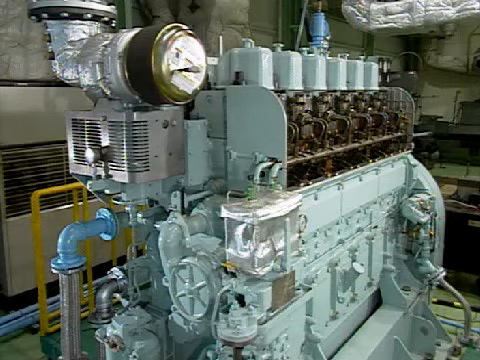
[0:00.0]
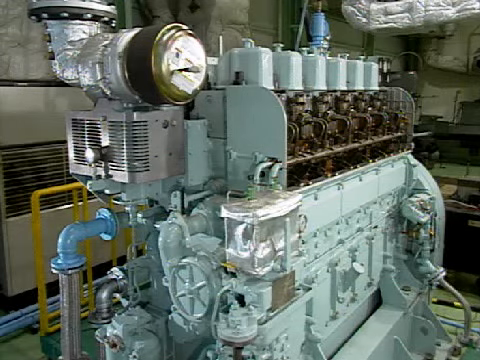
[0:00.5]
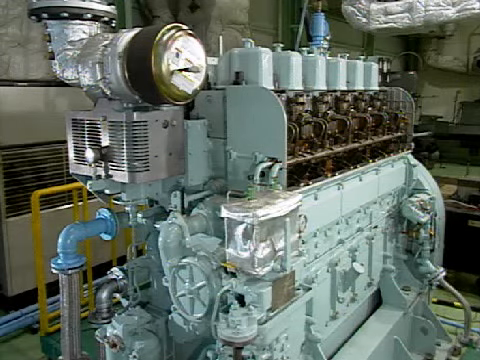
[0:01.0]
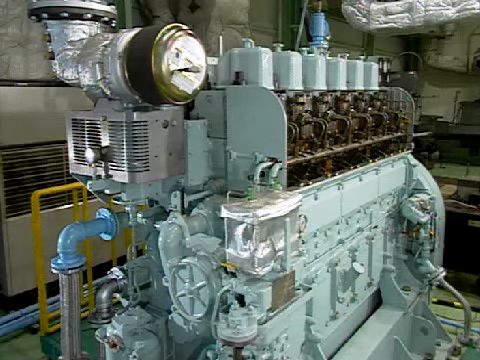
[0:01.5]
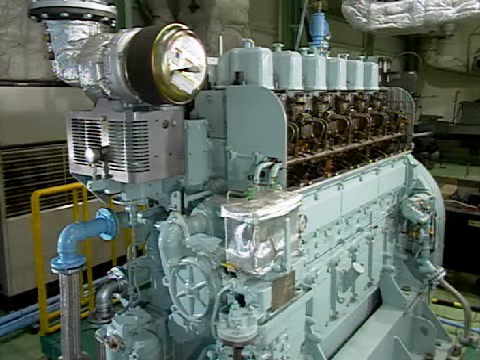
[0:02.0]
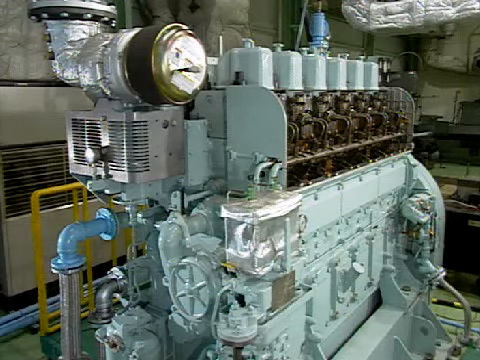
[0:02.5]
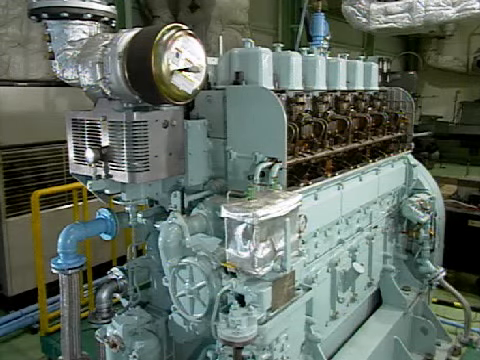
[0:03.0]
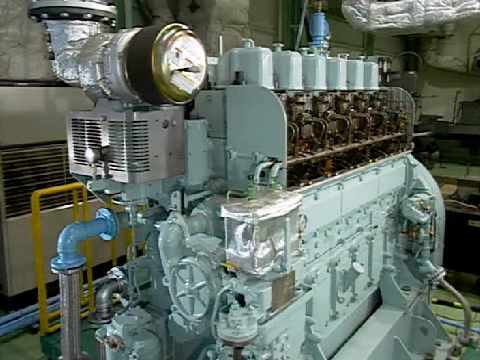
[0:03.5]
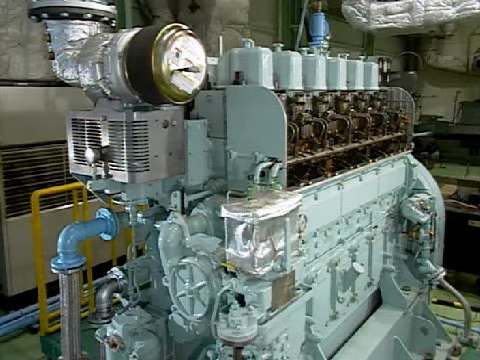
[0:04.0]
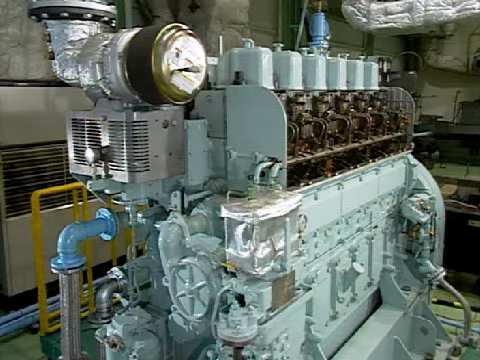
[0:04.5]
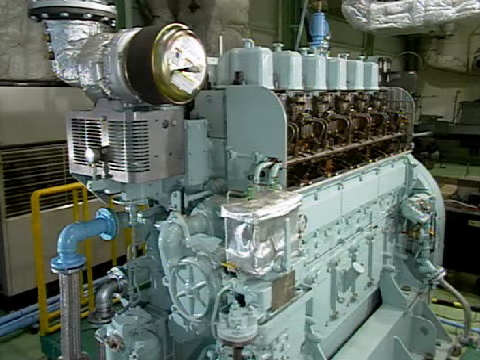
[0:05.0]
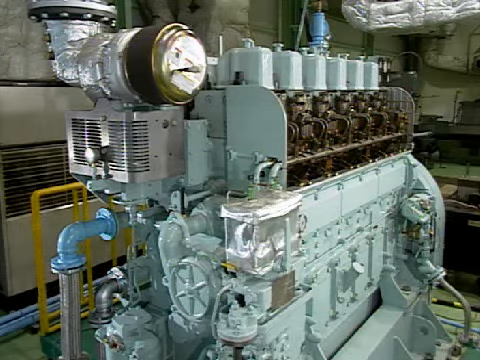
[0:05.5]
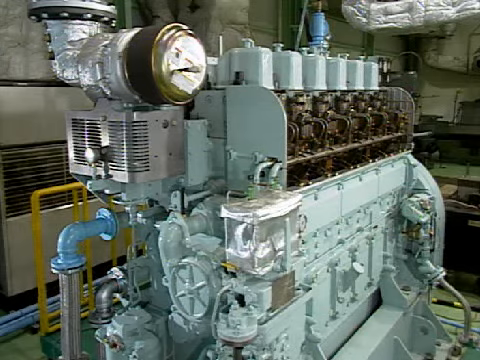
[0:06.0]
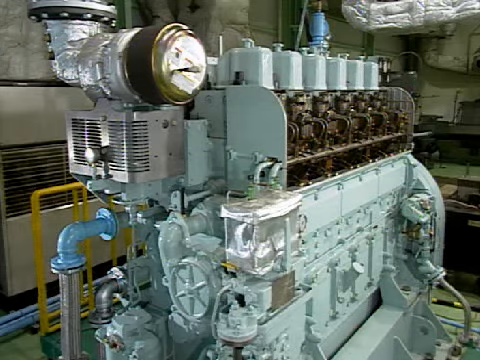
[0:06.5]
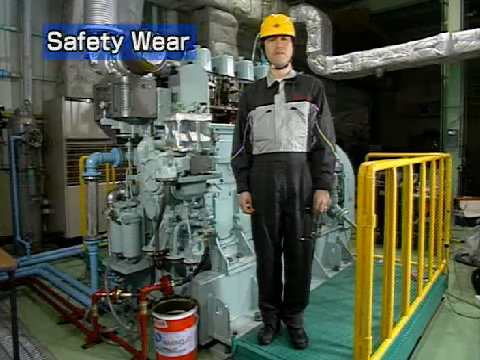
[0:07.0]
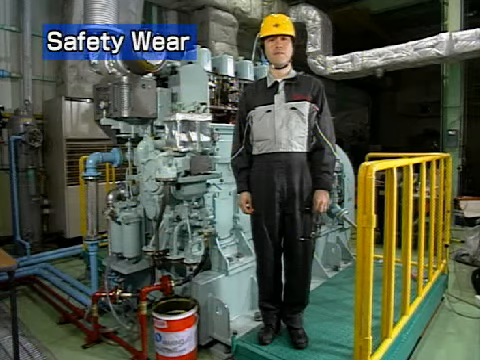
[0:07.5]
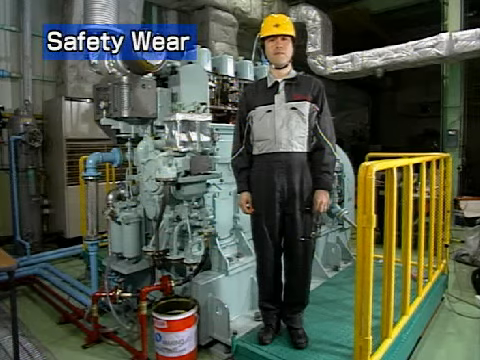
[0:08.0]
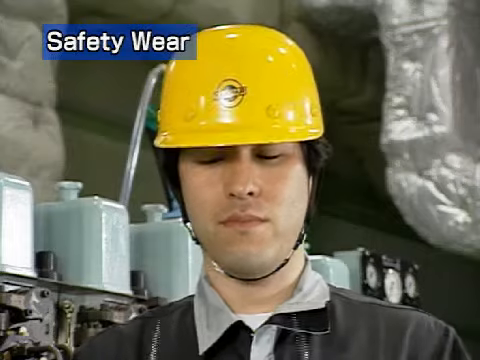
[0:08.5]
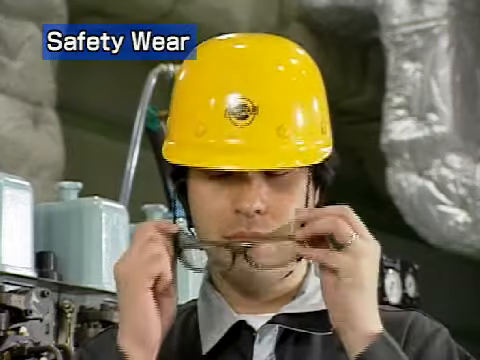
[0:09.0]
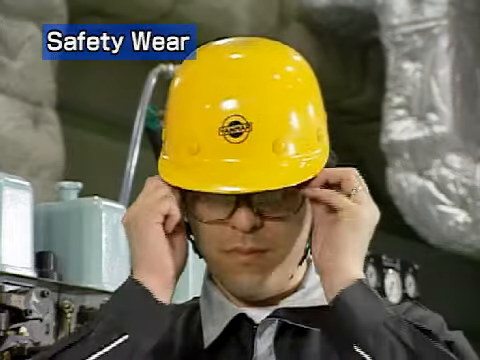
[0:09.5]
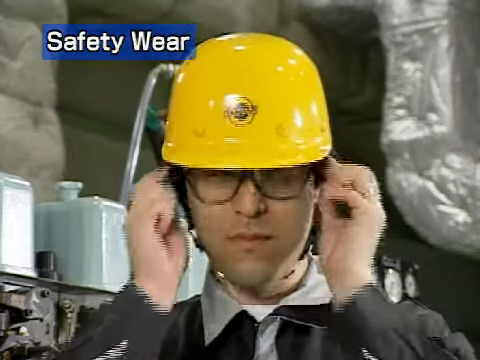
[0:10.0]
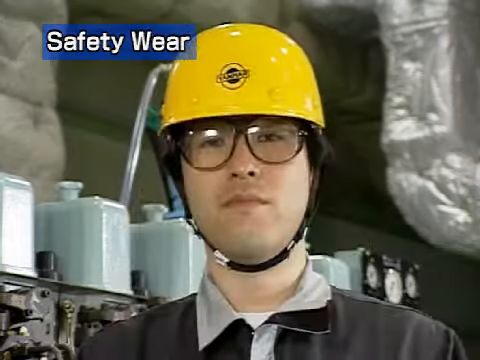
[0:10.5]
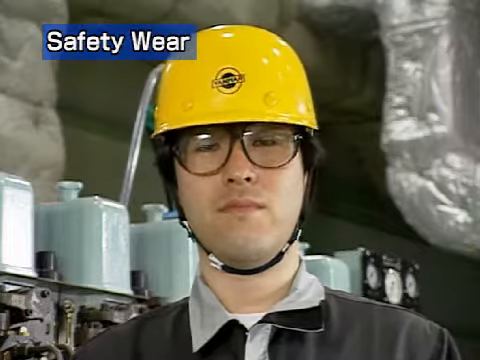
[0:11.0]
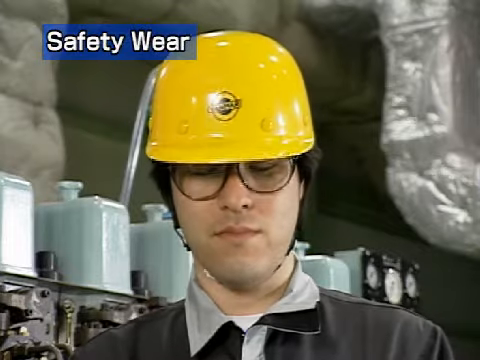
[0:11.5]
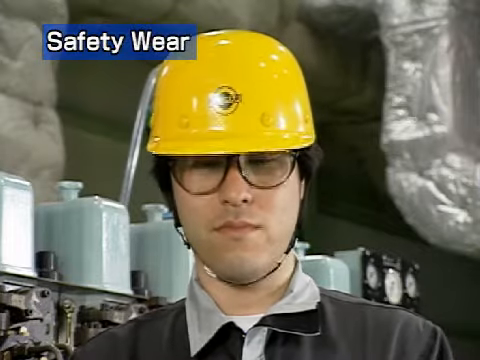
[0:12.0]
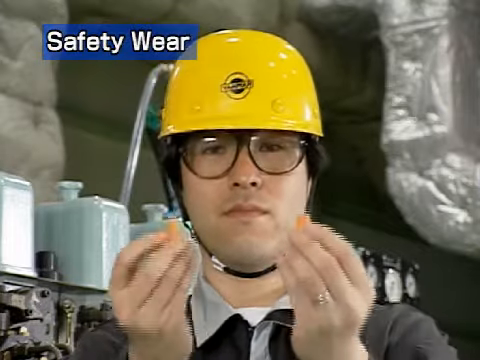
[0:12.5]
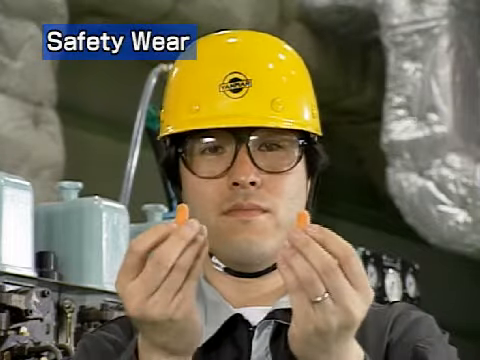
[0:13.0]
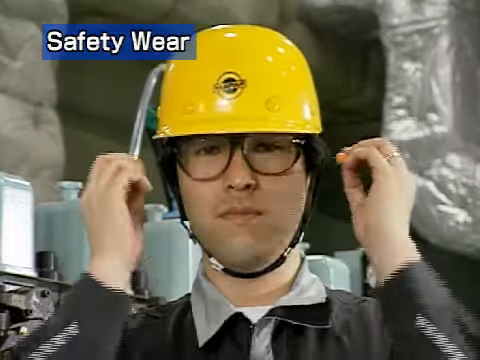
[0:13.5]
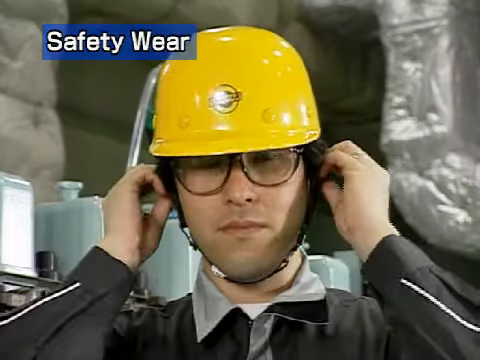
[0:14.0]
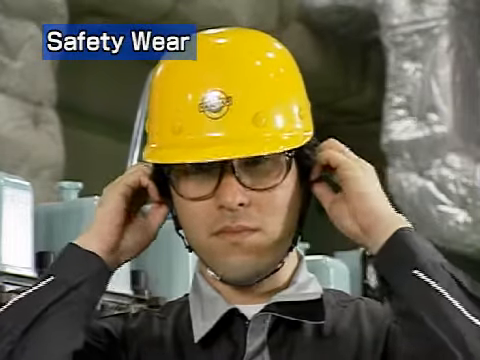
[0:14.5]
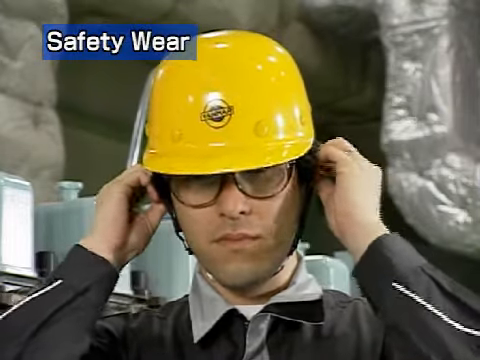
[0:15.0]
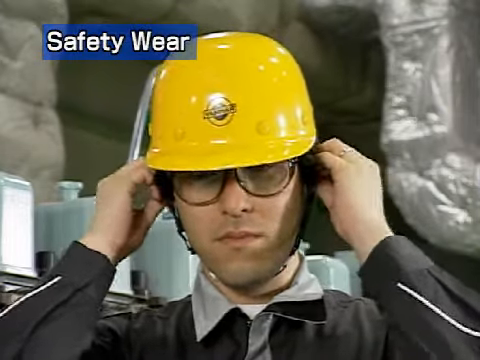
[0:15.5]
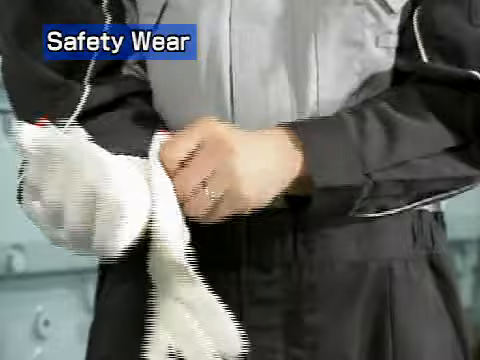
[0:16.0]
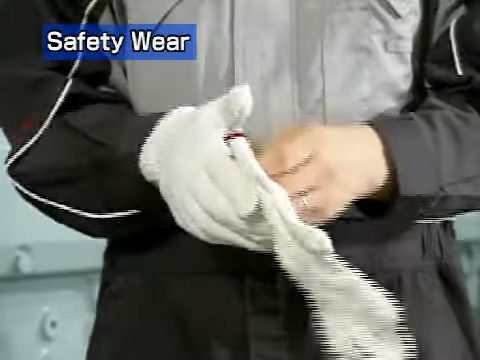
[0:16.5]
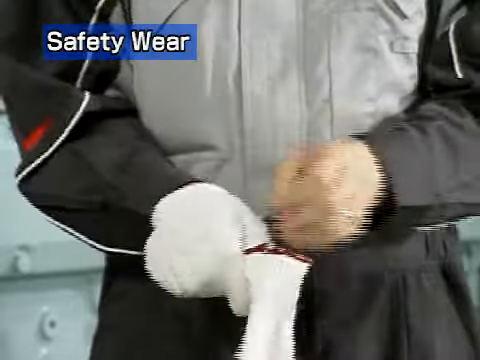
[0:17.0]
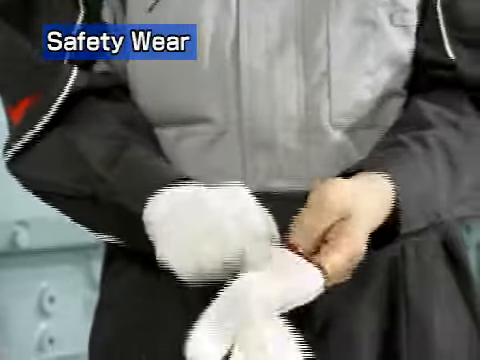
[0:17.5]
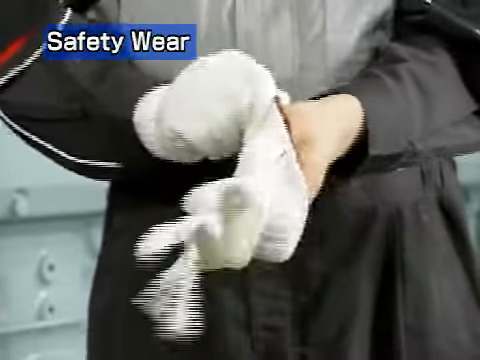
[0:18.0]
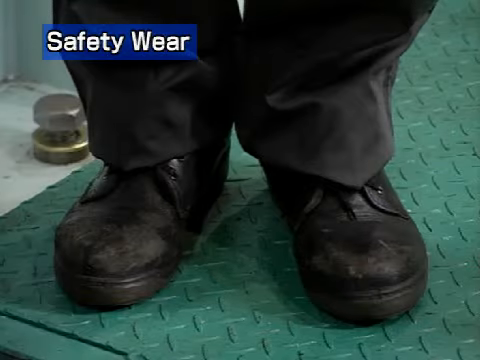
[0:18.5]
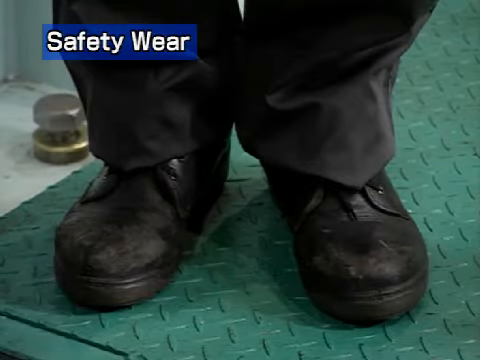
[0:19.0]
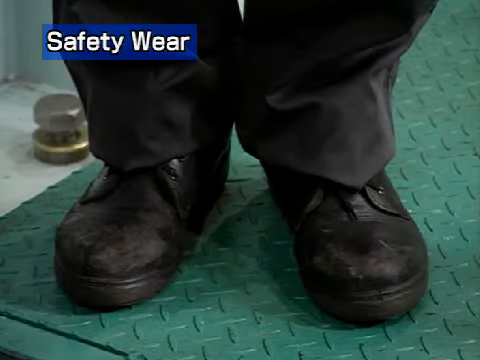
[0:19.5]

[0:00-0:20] A big machine in a factory appears to be very dangerous. A worker appears and demonstrates the safety equipment that should be used to operate it: a safety helmet, safety glasses, earplugs to be placed in the ears, safety gloves, and safety shoes. Several mandatory safety items are shown.